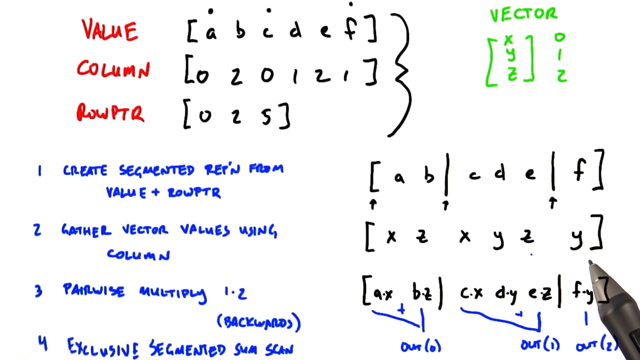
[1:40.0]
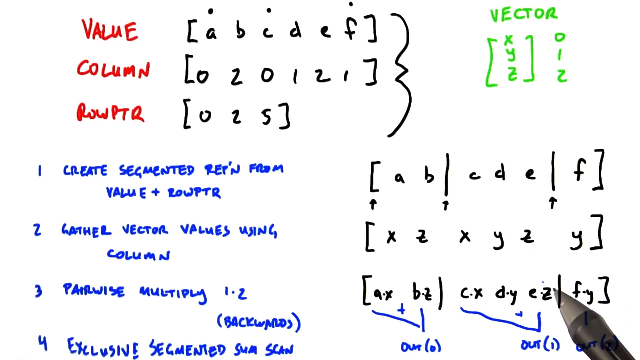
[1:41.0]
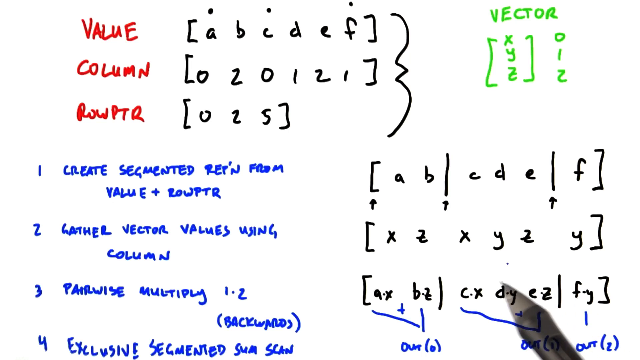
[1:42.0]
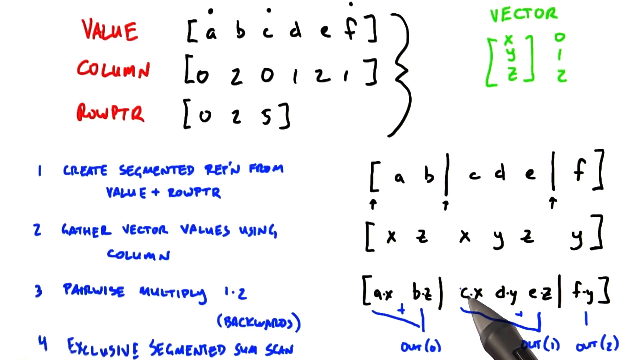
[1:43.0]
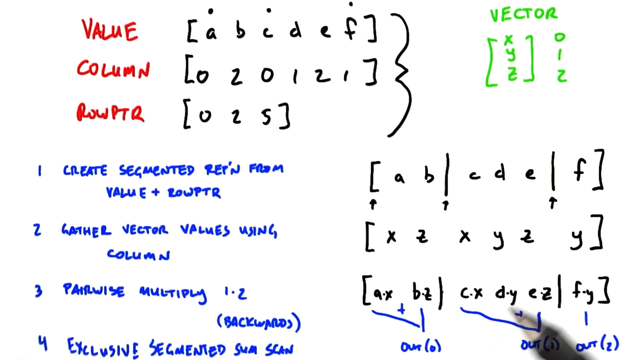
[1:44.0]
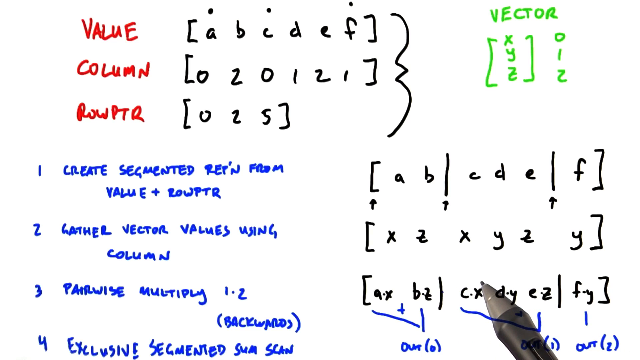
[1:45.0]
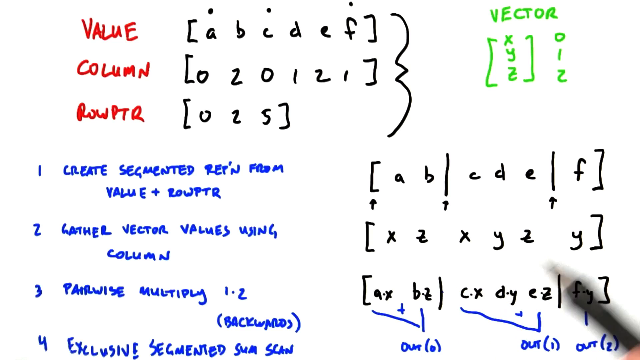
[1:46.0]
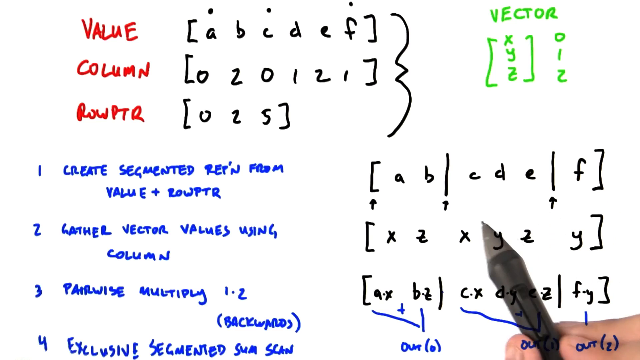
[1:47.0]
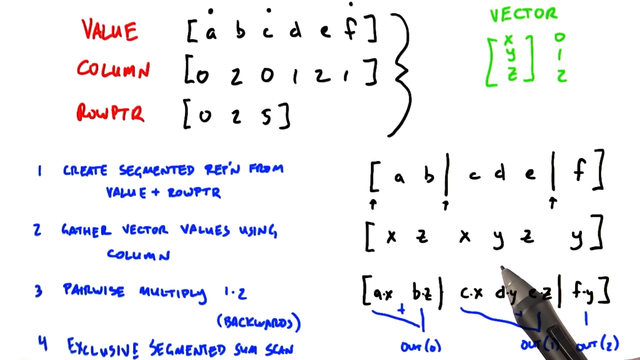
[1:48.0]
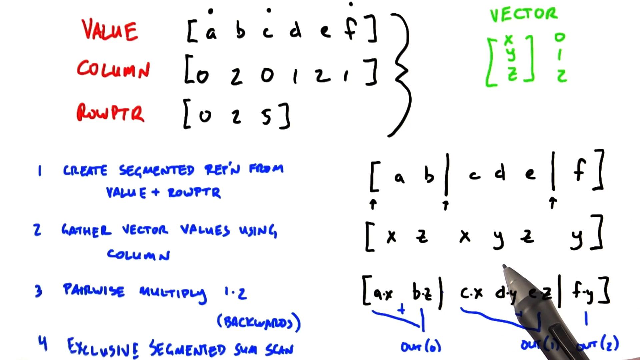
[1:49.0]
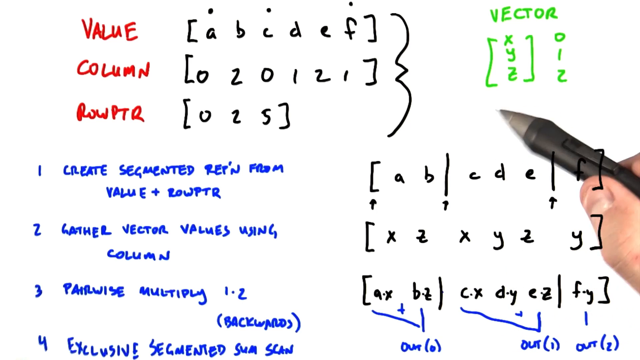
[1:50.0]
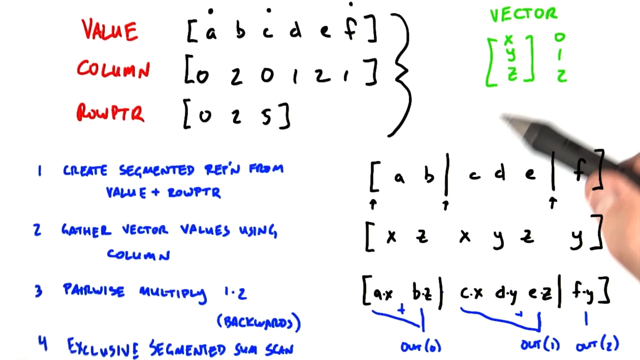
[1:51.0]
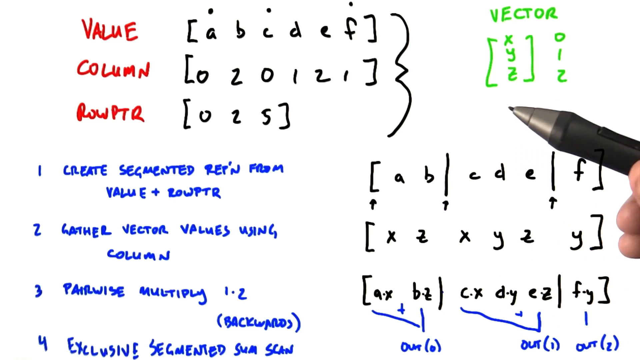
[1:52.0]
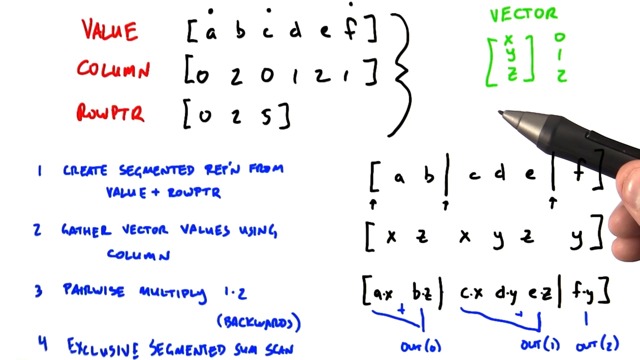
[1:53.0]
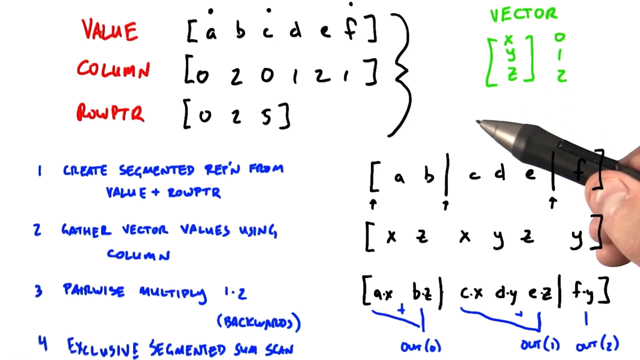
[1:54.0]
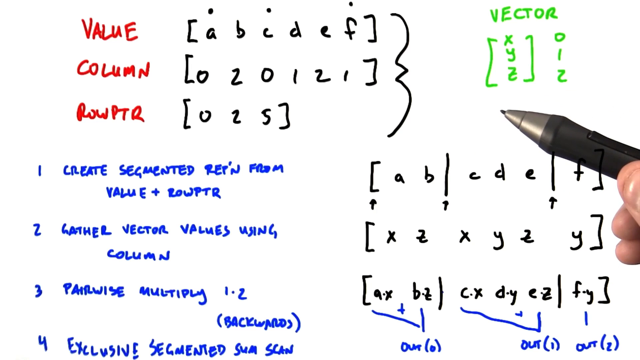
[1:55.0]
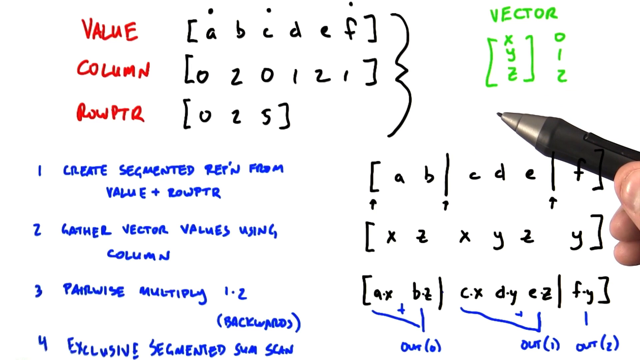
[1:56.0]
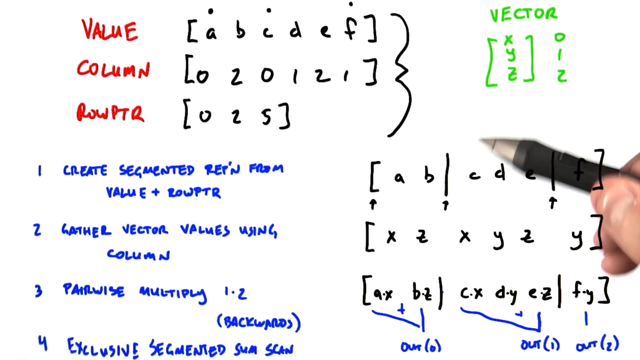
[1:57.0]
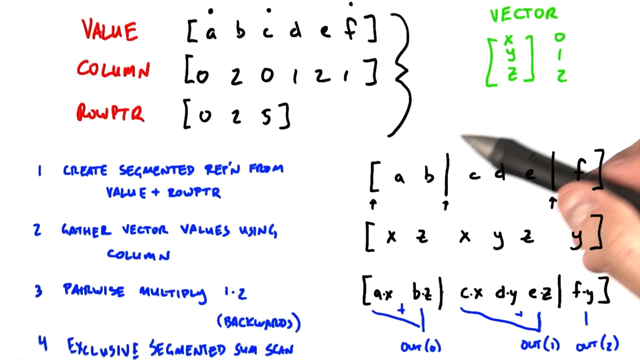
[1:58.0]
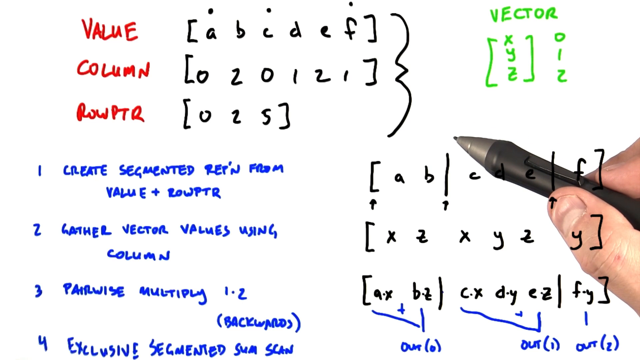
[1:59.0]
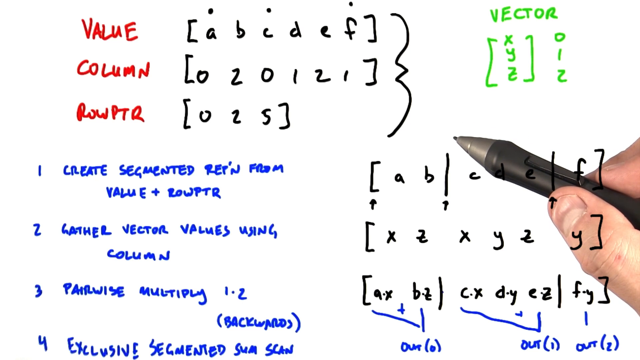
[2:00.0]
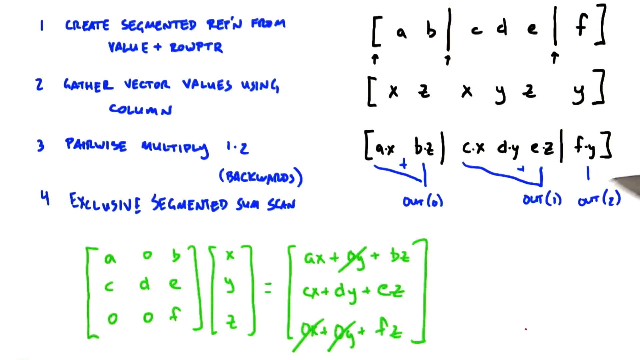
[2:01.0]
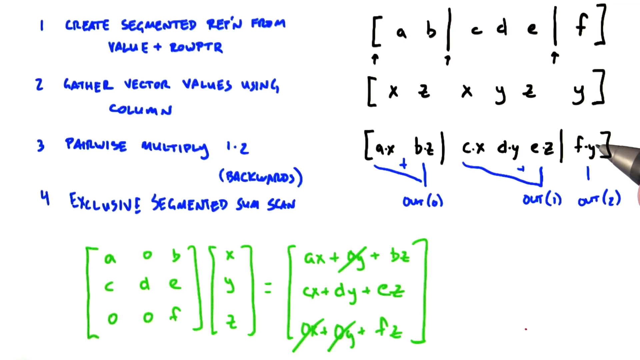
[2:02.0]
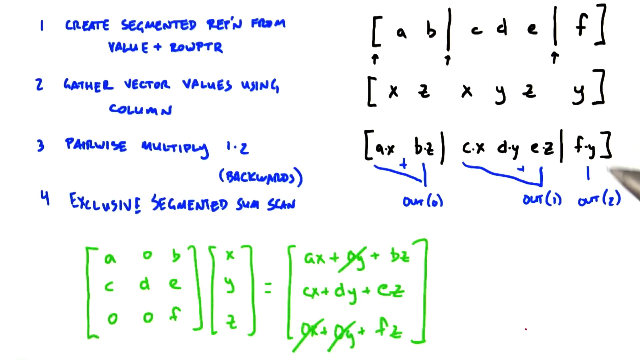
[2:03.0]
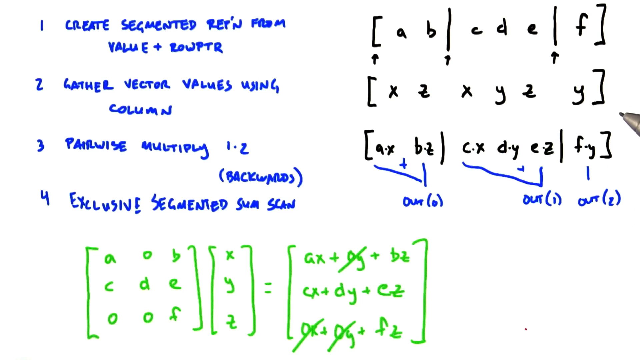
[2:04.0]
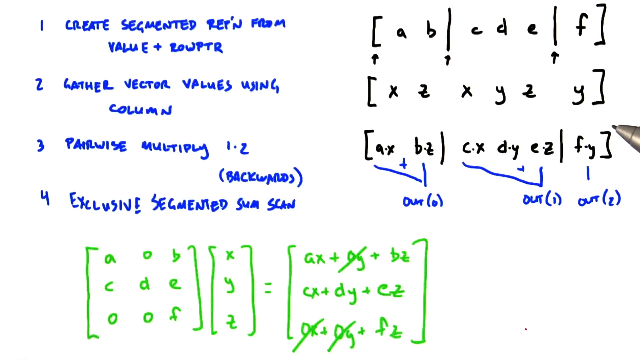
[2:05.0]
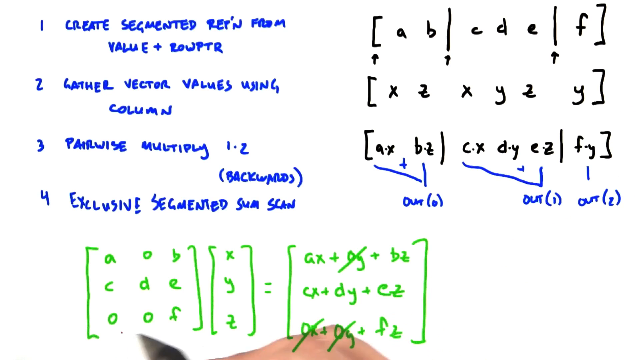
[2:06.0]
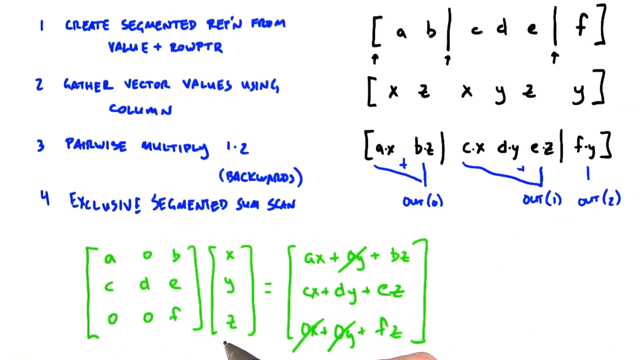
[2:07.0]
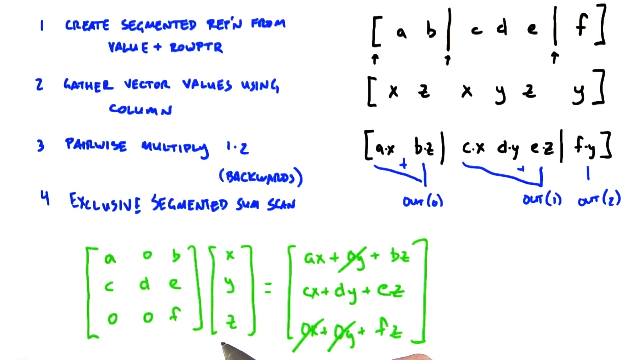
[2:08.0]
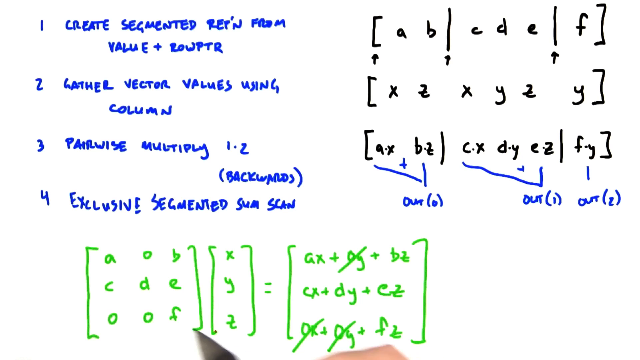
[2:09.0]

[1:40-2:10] On the left side of the screen are the labels Value, Column, and Rowptr, written in red, each with an equation next to it written in brackets involving letters and numbers. On the right side is the area labeled Vector, written in green. Directly under the Vector label are the letters X, Y, Z in brackets on the left, with the numbers 0, 1, and 2 next to them on the right. Using the black pen, the hand gestures toward the equations in step 3, step 2, and step 1, then goes back to point at the items under the Vector label. The screen then changes to show a fourth step that says "Exclusive Segmented Sum Scan." Below step 4, written in green, is a mathematical equation using letters and symbols inside brackets.